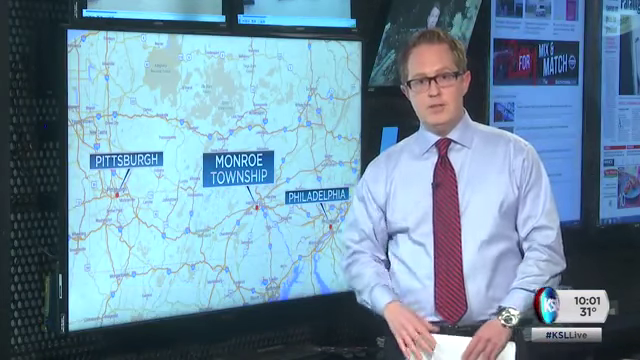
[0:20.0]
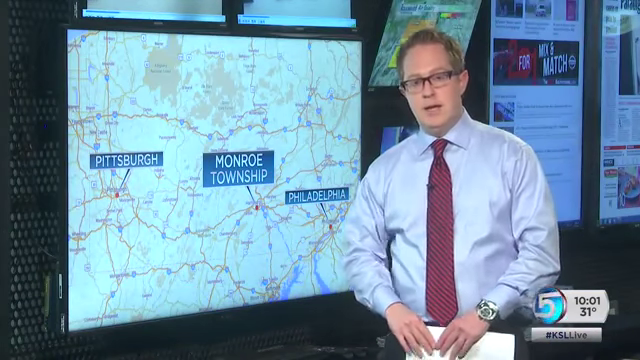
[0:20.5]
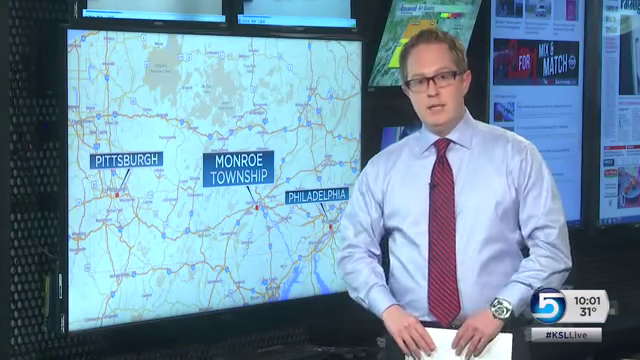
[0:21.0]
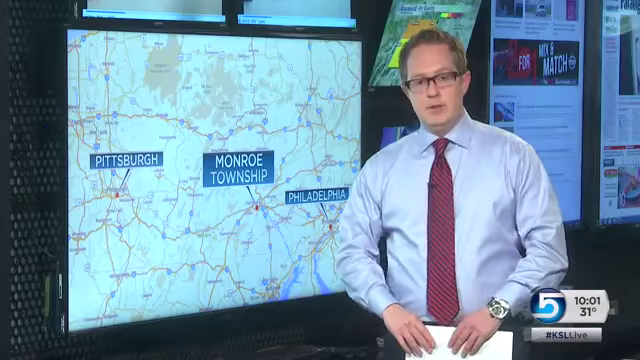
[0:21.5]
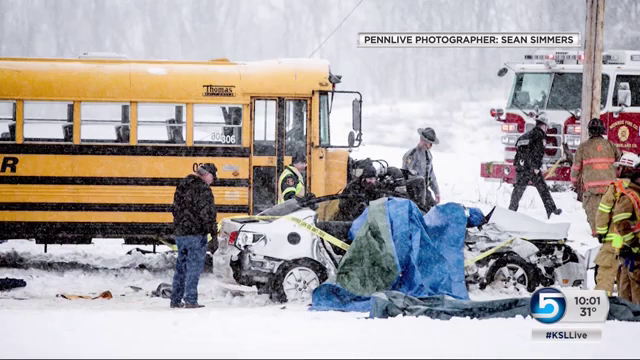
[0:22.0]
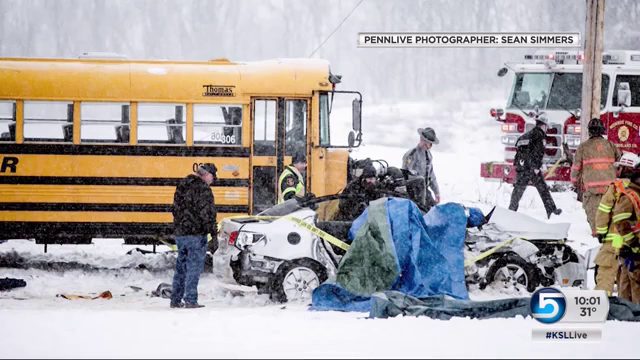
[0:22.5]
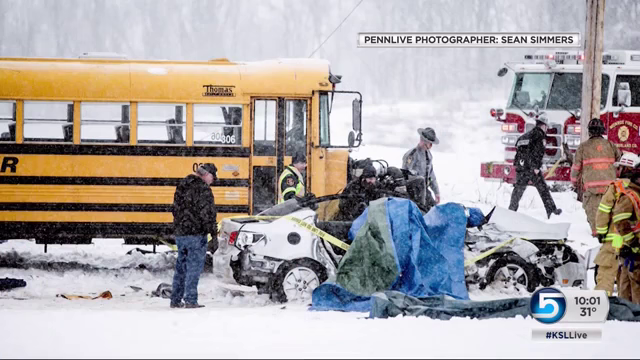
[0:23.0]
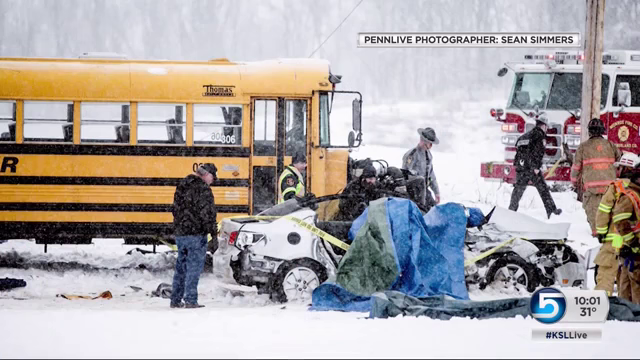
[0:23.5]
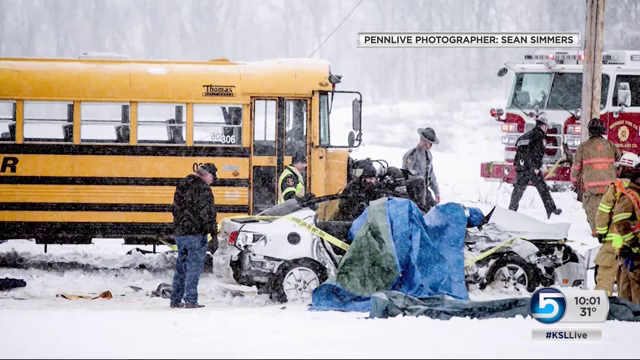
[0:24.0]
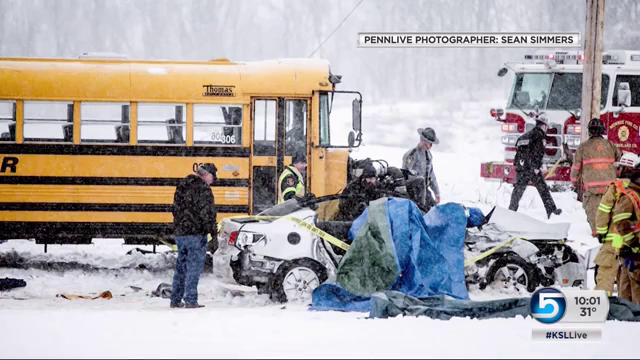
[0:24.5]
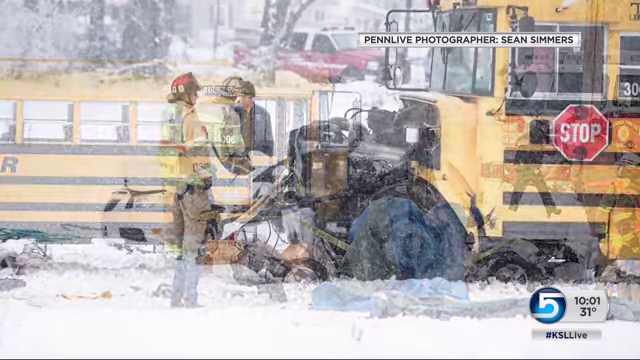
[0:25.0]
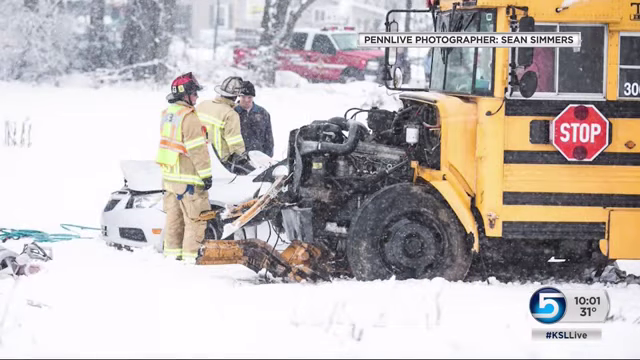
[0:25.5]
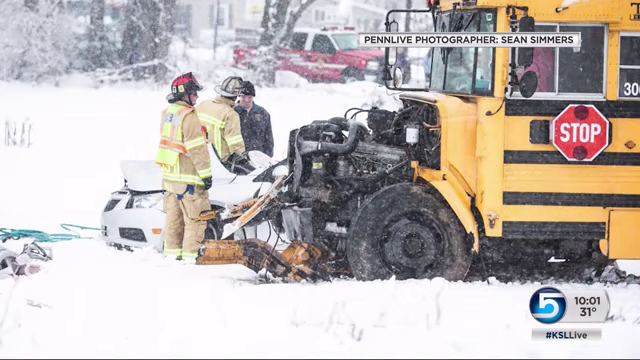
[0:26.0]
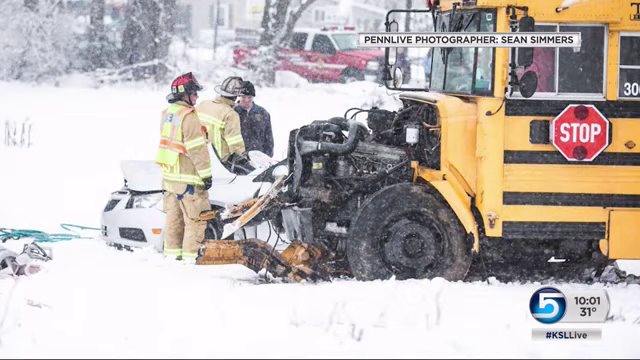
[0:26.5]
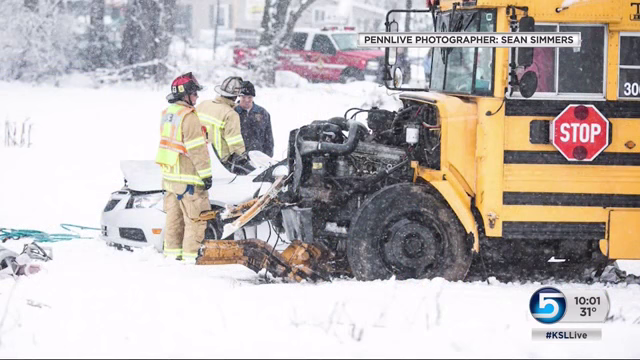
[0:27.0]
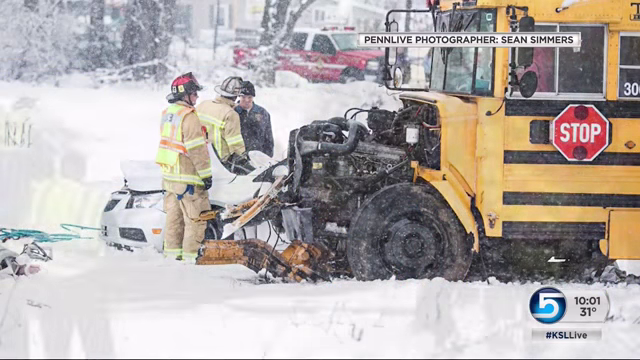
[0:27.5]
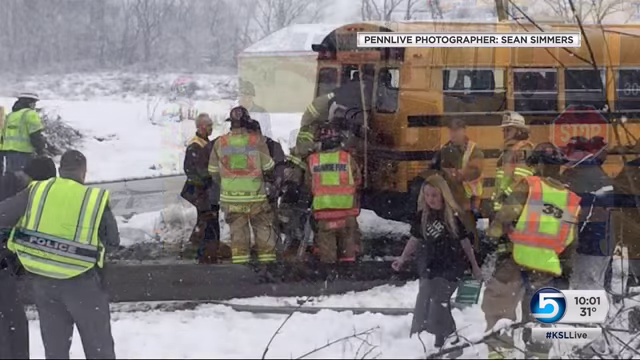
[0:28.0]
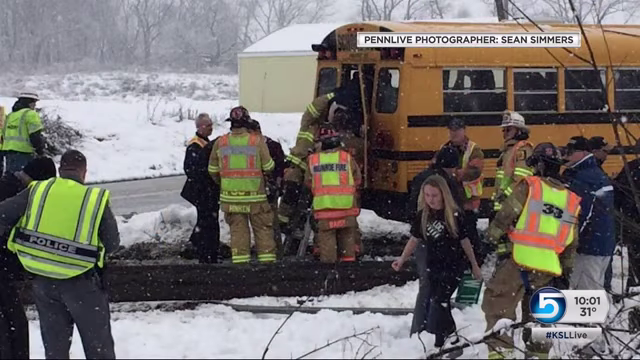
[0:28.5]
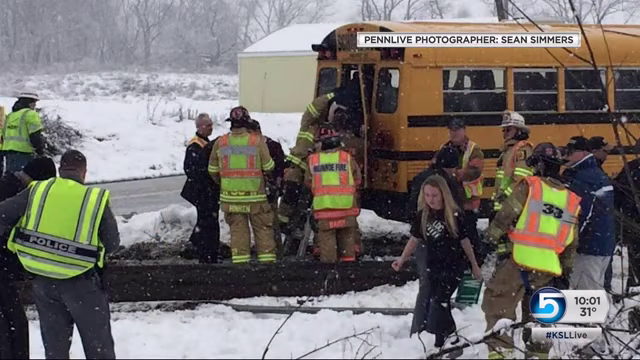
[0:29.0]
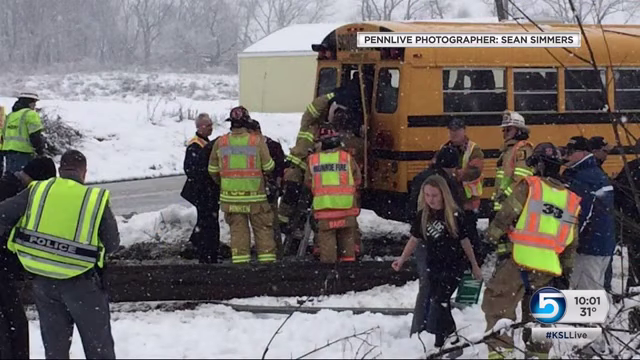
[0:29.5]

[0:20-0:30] The anchor kind of keeps his hands down, apparently holding onto a paper with both hands right in front of his abdomen. The video cuts to a still photo of the car accident: a yellow school bus is in the background, and it seems to be snowing a lot. The sedan is in the foreground, with a man standing behind it to the back left of the image. To the right of the sedan, some firefighters are kind of walking away from the camera, and in the background on the right is what looks like a fire truck. Text at the top says "Penn Live photographer Sean Simmers." The video then cuts to another image, this time of the front of the school bus, whose front end is torn off, with a firefighter standing right in front of it. It then cuts to another image.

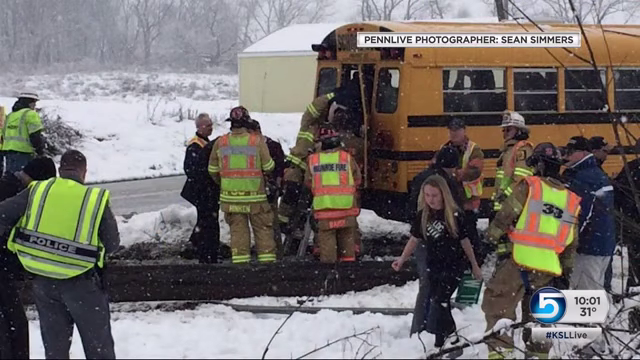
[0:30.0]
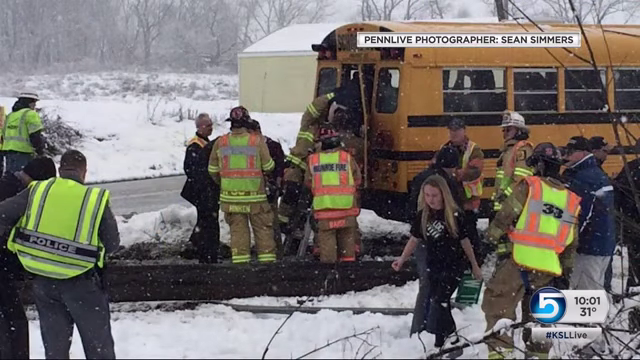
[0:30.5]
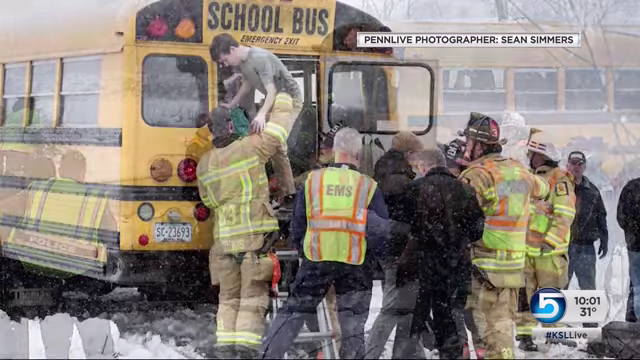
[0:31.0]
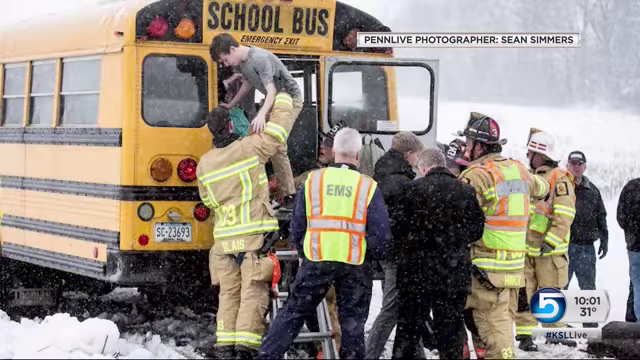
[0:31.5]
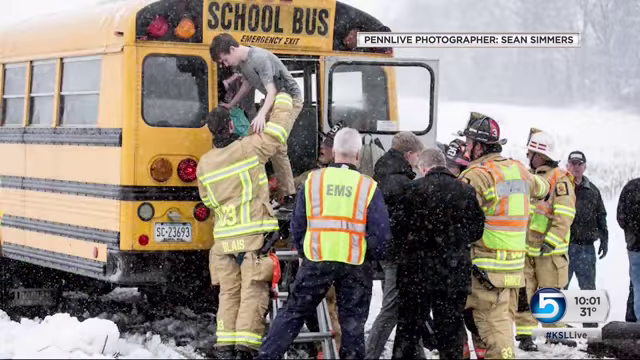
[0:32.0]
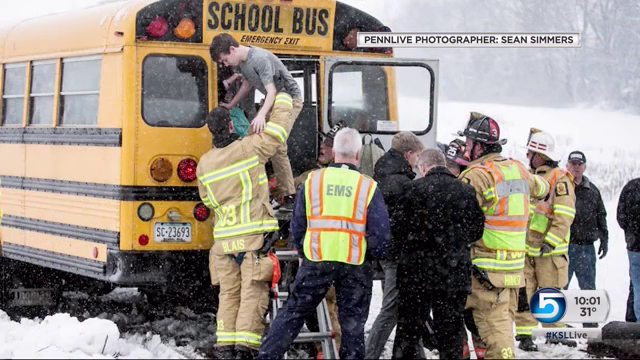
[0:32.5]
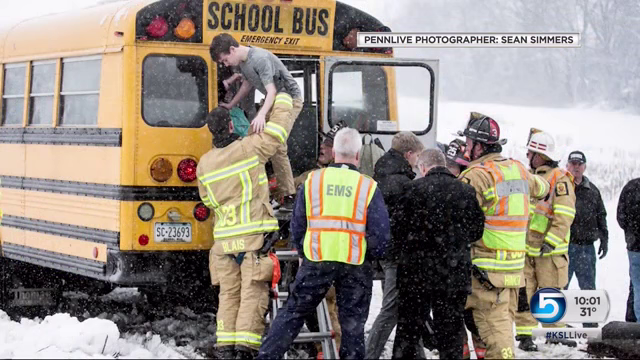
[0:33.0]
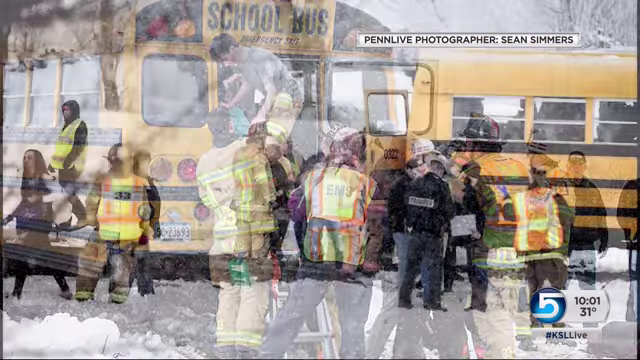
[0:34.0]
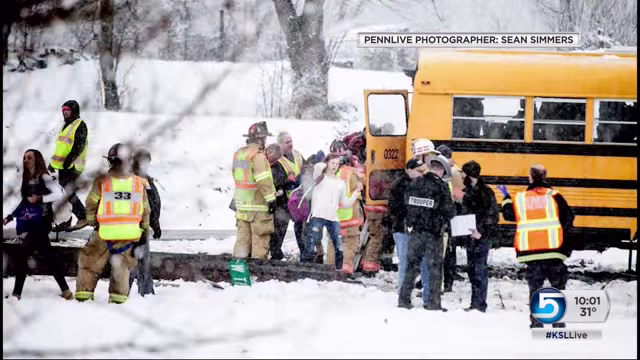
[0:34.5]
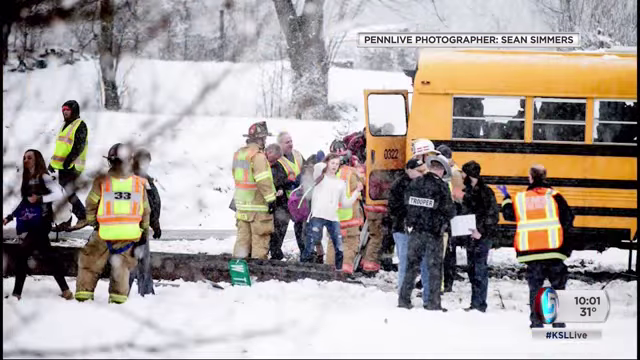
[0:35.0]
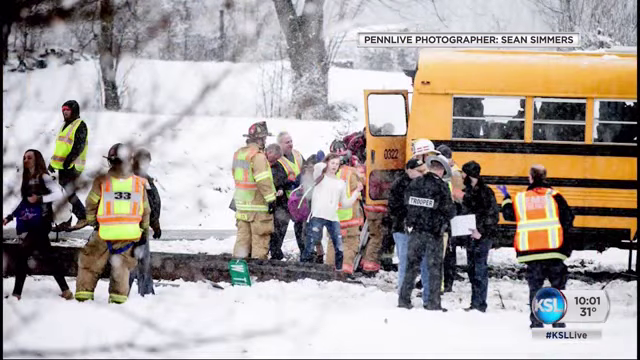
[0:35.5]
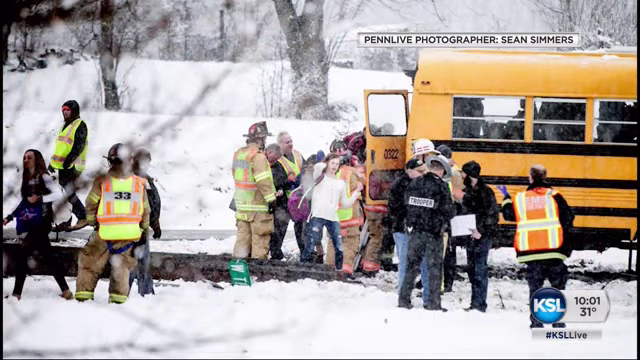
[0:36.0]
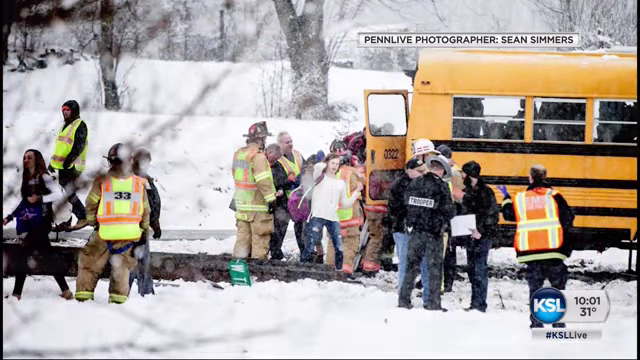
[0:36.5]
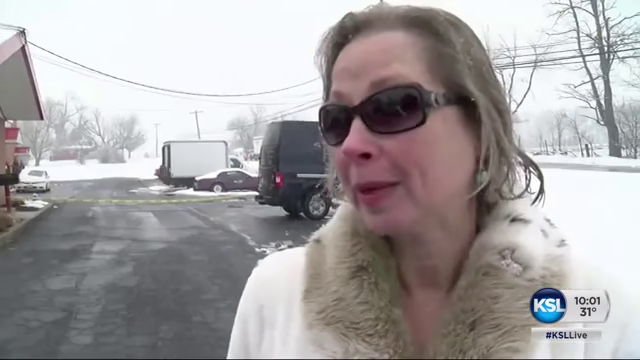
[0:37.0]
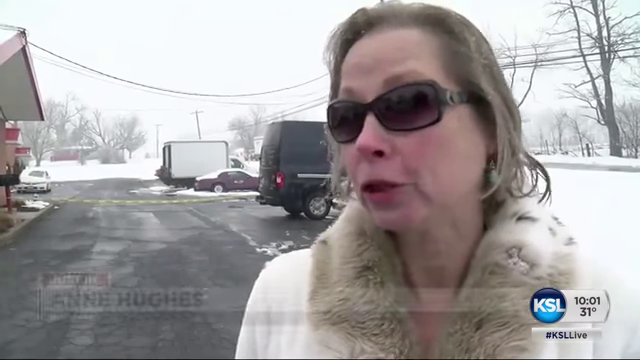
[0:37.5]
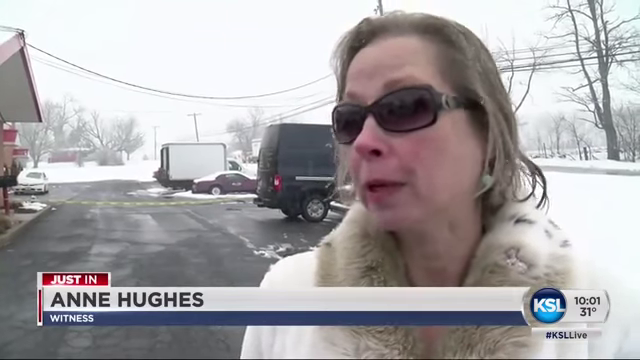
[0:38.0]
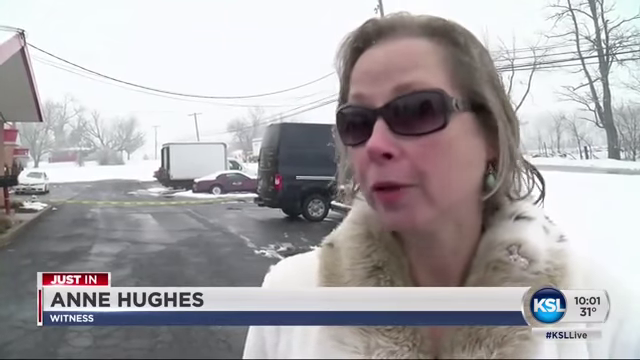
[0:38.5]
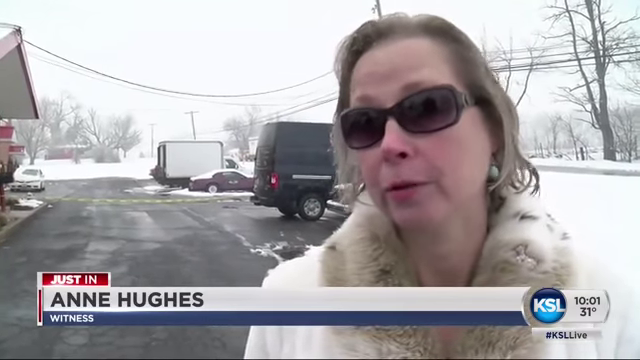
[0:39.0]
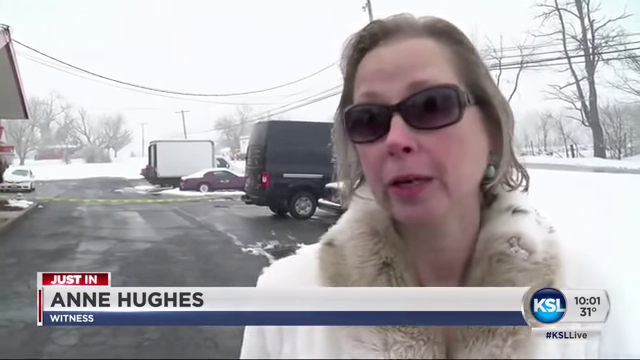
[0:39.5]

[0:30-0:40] More images of the school bus follow. A firefighter helps a kid get out of the back of the school bus, and another couple of firefighters are there as well, apparently helping the kids get out. Further images show the firefighters helping the kids out of the bus. It looks like the school bus and the car crashed into each other with kids on board. The video then cuts to an interview with a woman wearing sunglasses and what looks like some kind of fur jacket. She talks toward someone off camera to the left, and text under her says "Anne Hughes." She shakes her head, looking really unhappy and emotional.